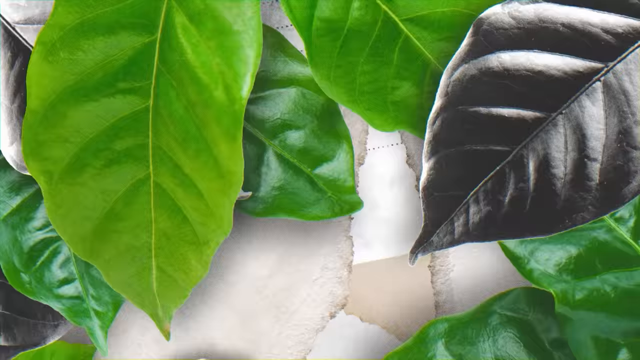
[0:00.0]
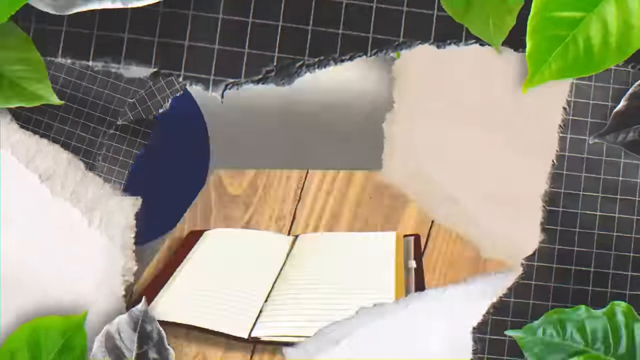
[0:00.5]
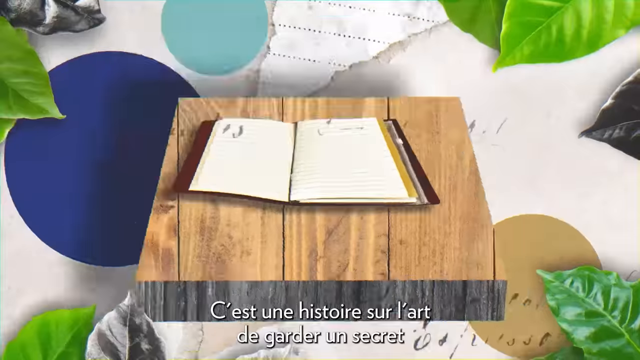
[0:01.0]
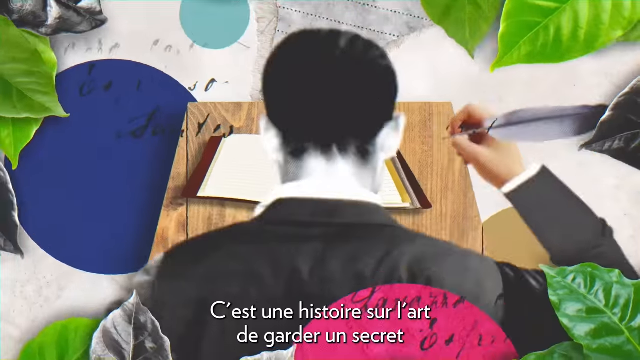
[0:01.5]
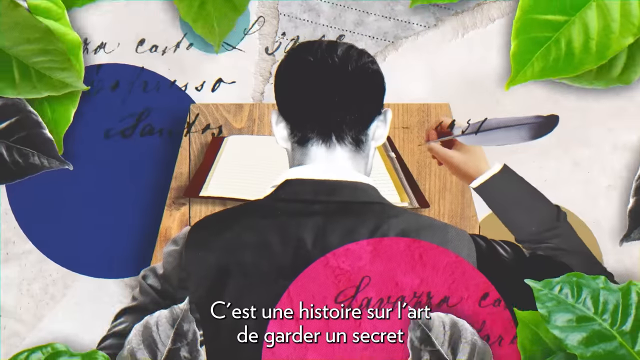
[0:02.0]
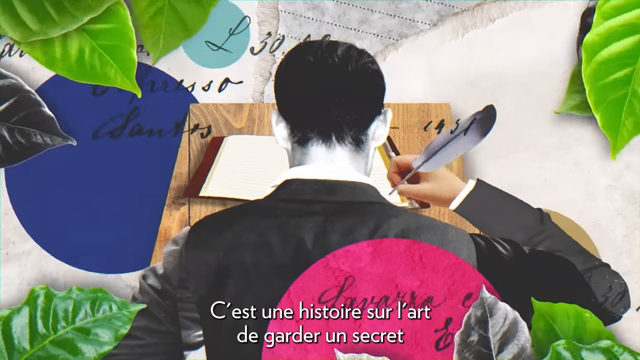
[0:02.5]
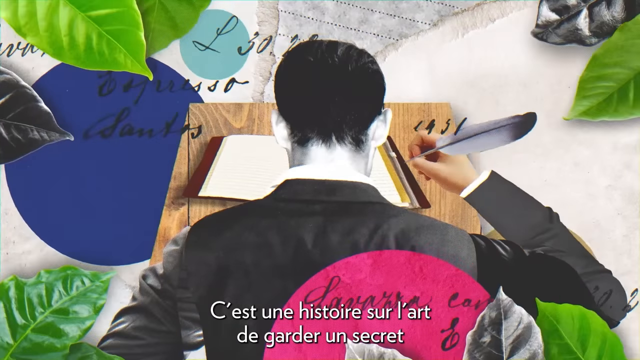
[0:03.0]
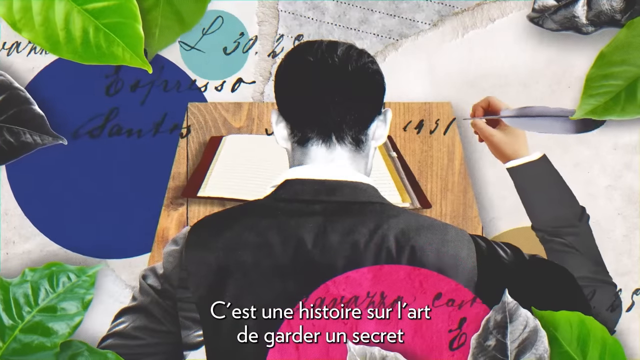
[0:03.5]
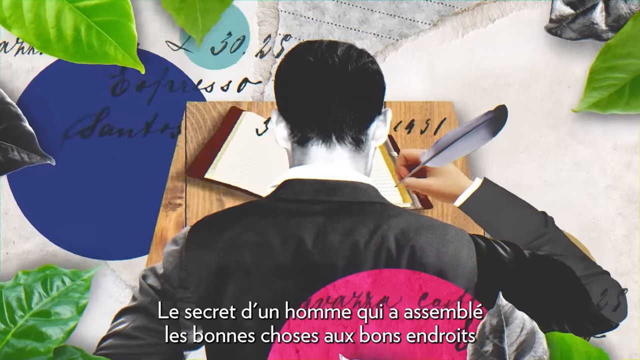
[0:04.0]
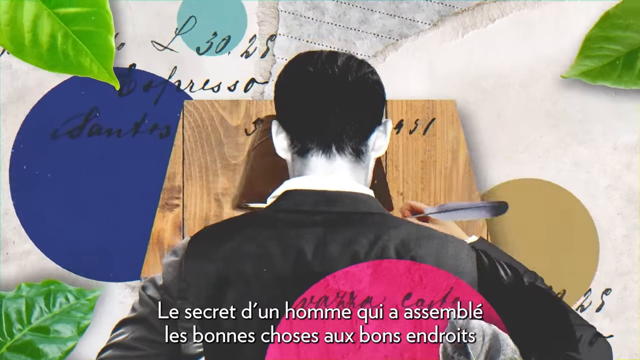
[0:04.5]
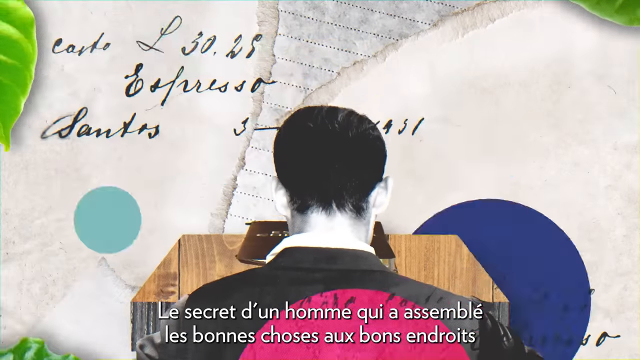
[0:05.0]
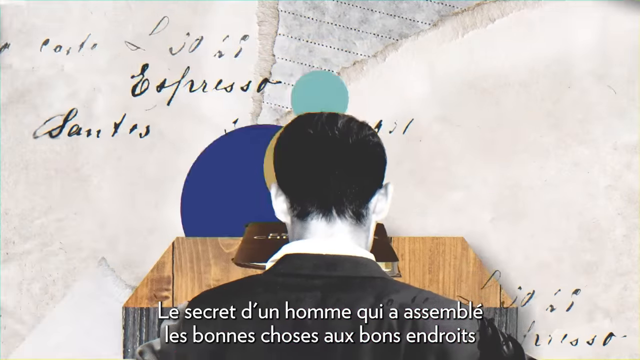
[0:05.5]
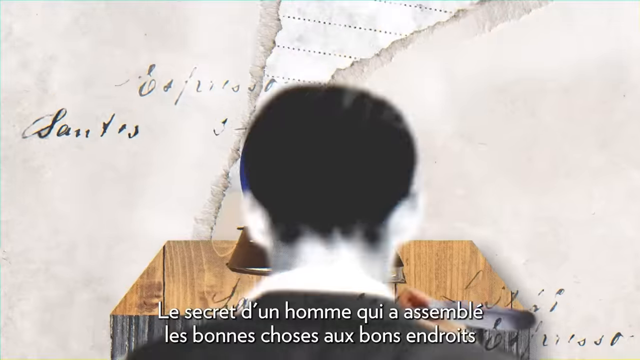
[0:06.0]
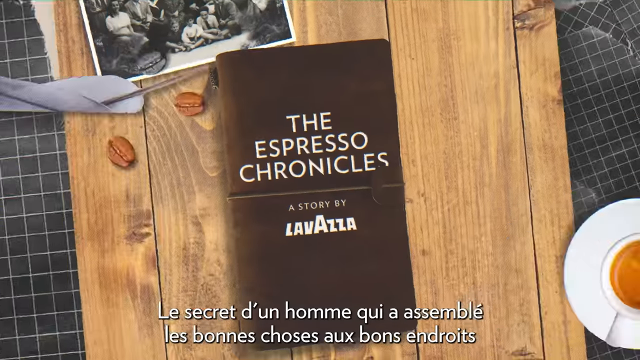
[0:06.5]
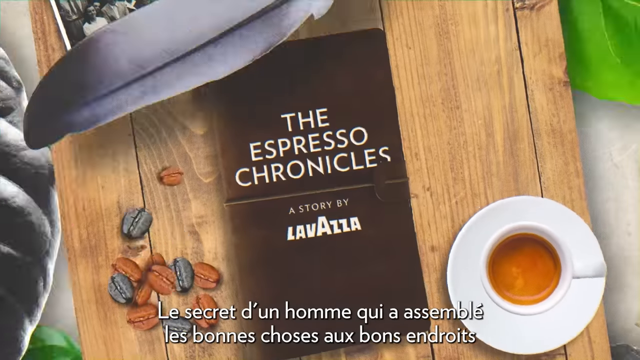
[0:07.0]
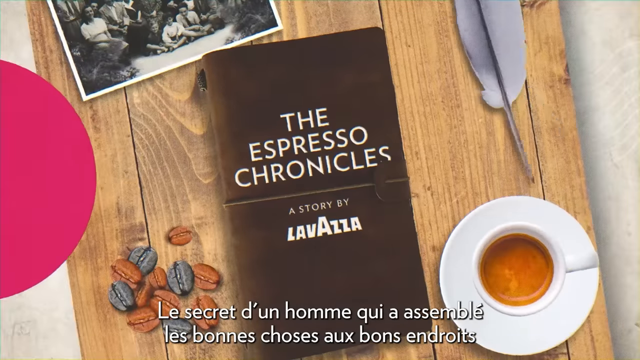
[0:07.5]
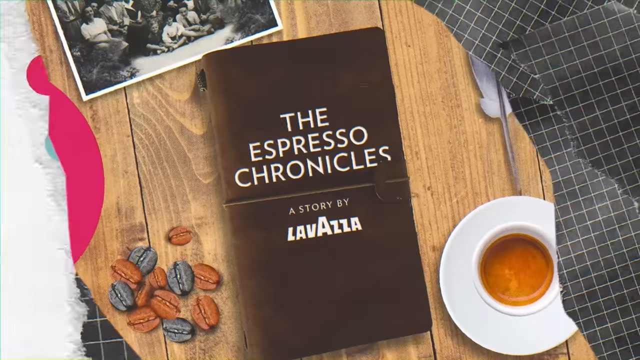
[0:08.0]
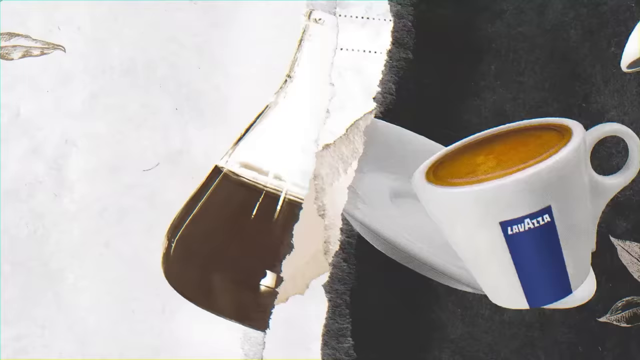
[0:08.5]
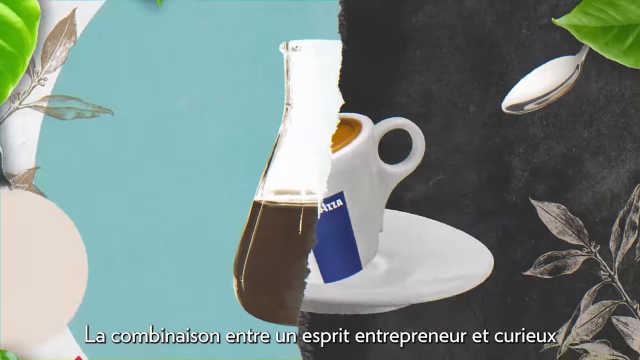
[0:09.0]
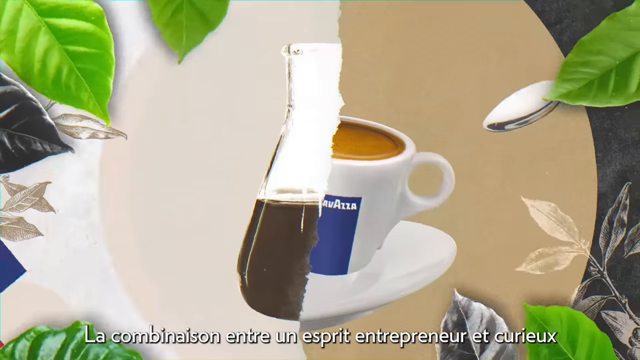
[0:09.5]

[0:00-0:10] The video is made in a sort of stop-motion manner, quickly moving through various heavily photoshopped images, such as leaves and scrapbook paper, in some sort of animation style, kind of like a collage of cut-out images and pictures. Eventually the leaves pull back to reveal a photograph of a man, with a different man's arm grasping a quill feather; he seems to be writing in a leather-bound journal. French subtitles in white text appear at the bottom. The man pulls away, showing the journal now closed, with a brown cover that reads in white text "The Espresso Chronicles, a story by Lav Aza." The journal is on a table next to black and brown coffee beans, a small coffee cup, and a photograph.